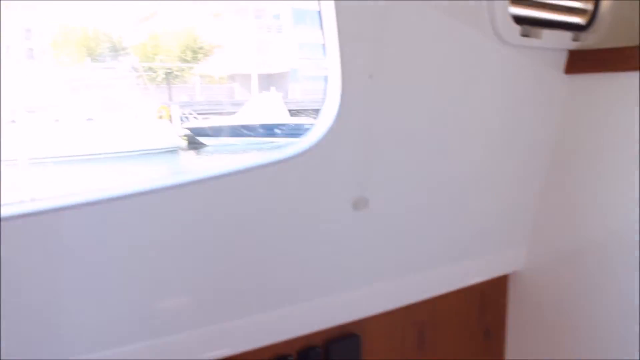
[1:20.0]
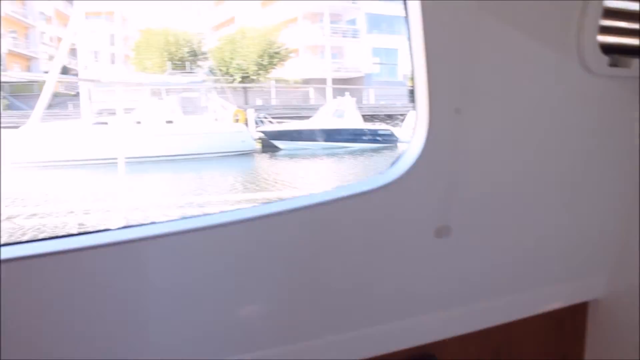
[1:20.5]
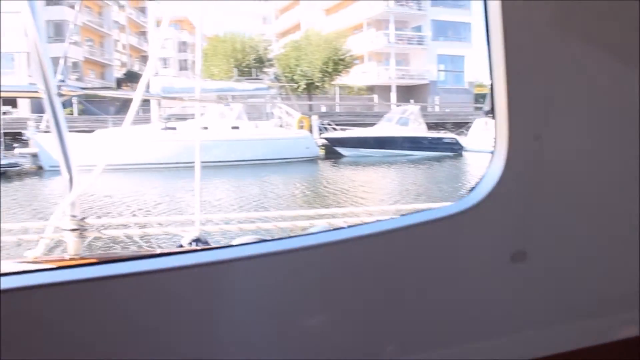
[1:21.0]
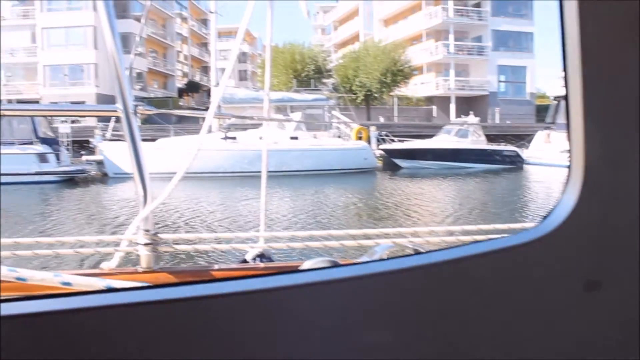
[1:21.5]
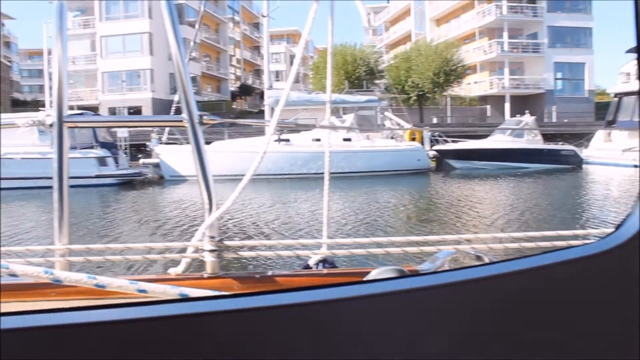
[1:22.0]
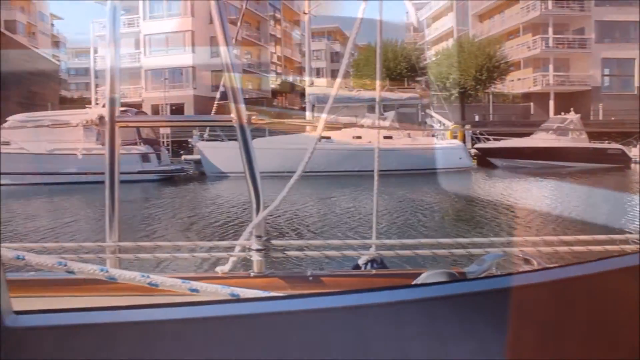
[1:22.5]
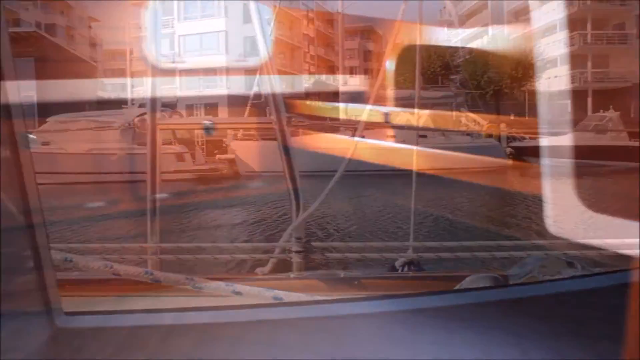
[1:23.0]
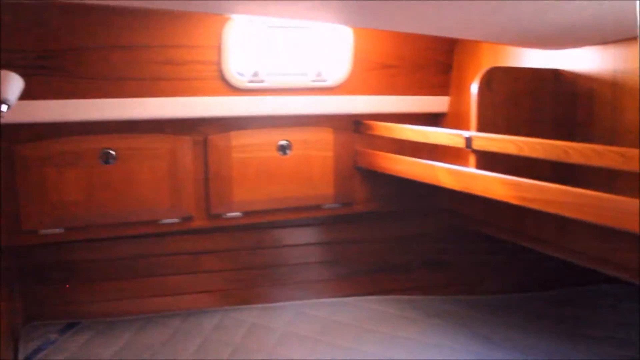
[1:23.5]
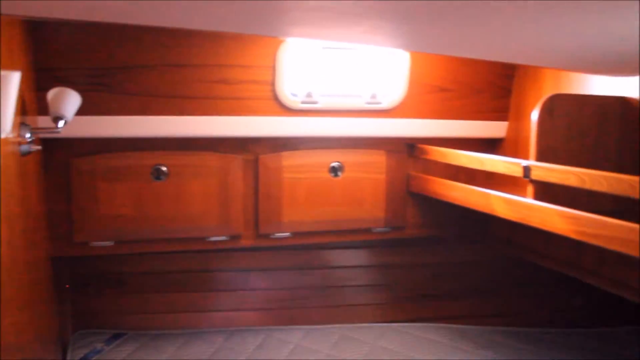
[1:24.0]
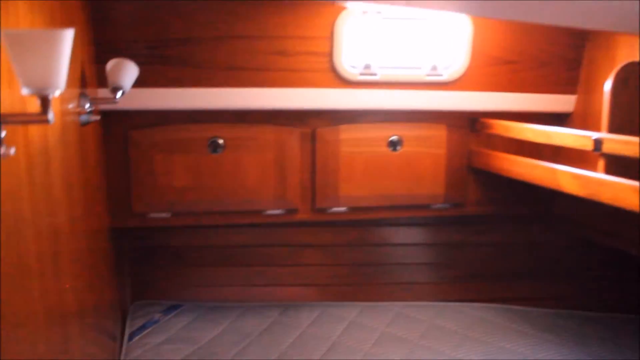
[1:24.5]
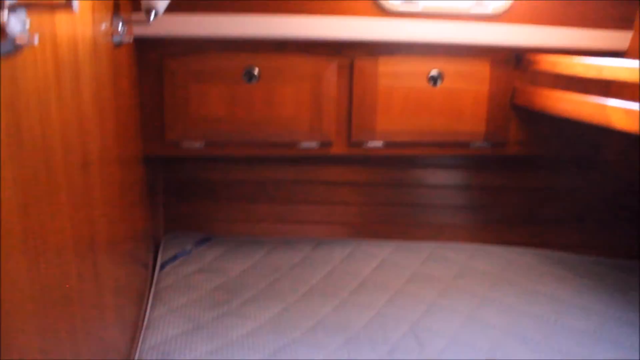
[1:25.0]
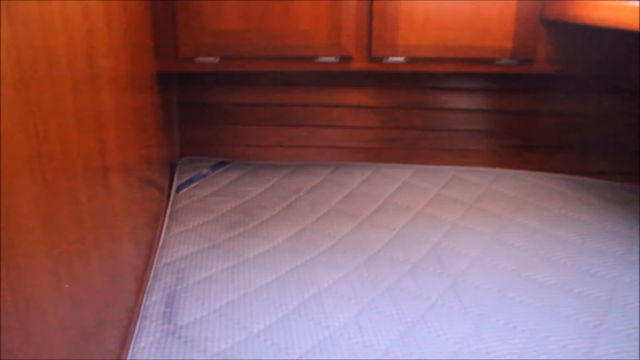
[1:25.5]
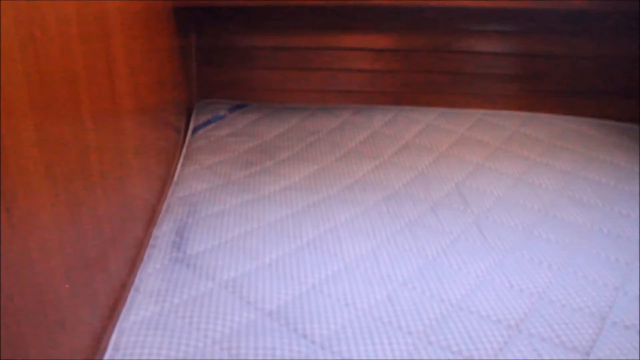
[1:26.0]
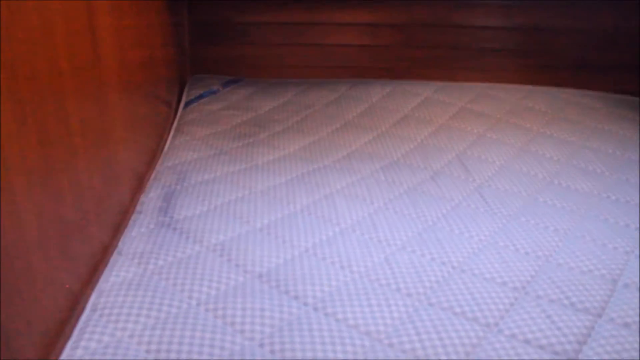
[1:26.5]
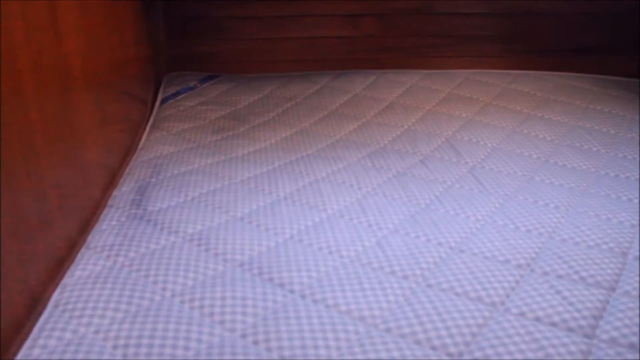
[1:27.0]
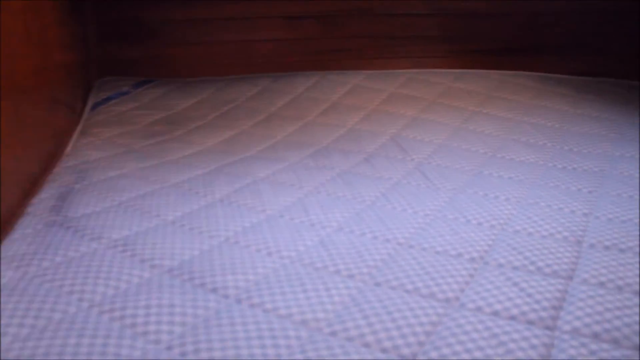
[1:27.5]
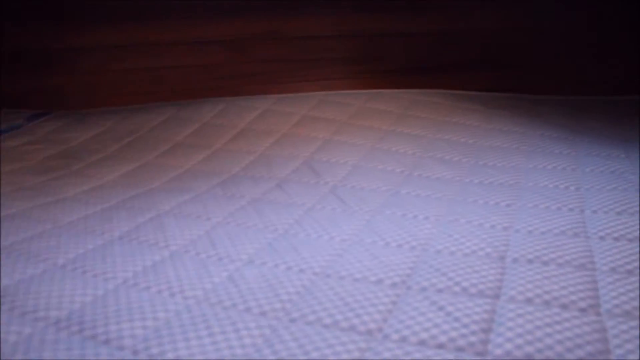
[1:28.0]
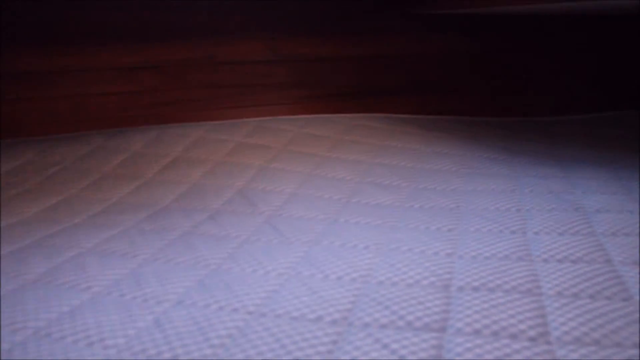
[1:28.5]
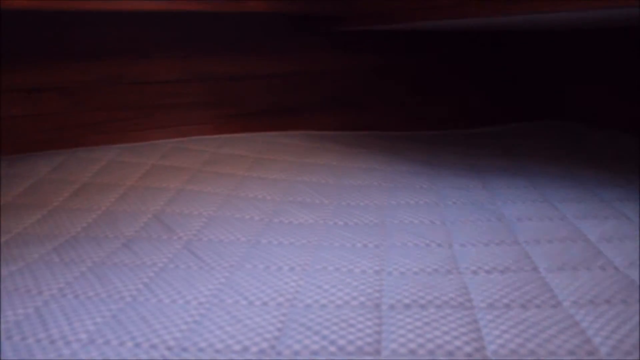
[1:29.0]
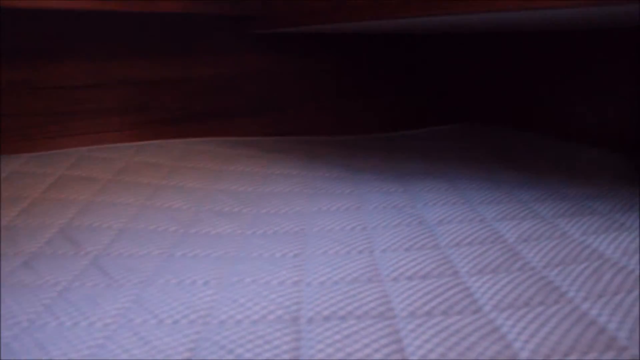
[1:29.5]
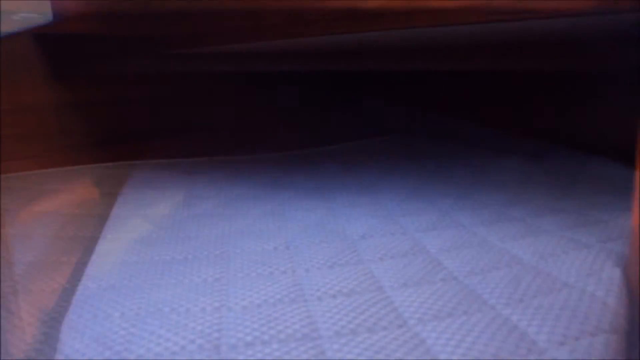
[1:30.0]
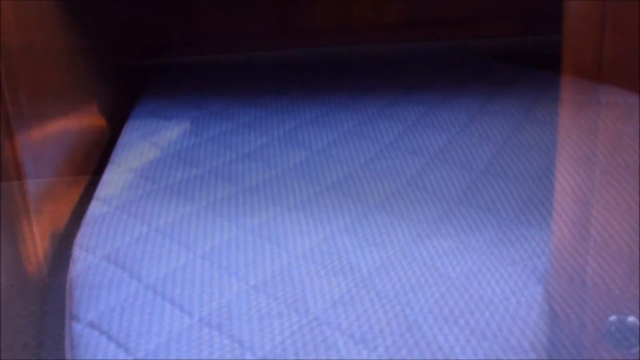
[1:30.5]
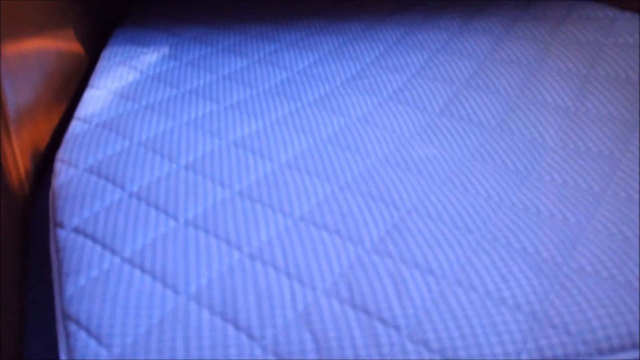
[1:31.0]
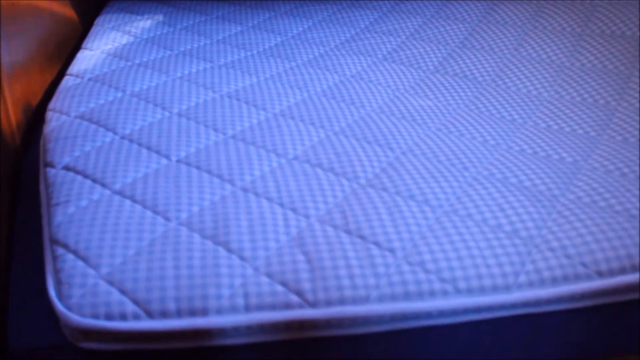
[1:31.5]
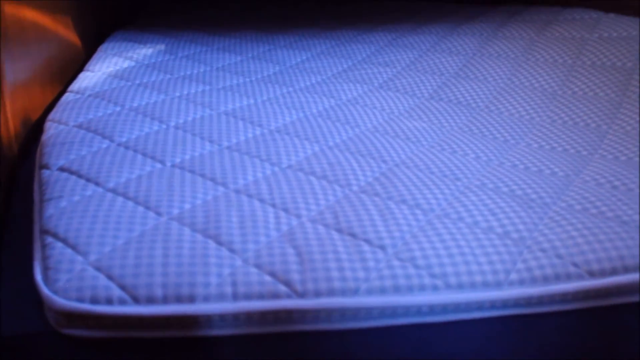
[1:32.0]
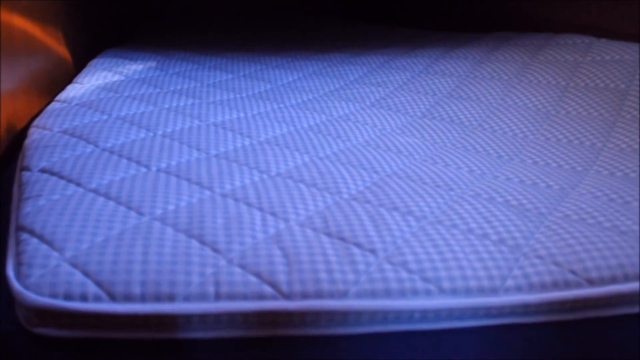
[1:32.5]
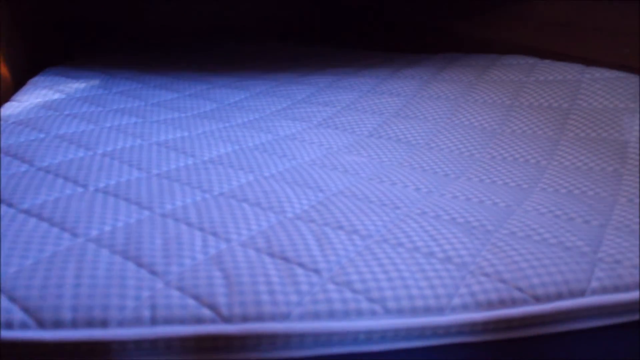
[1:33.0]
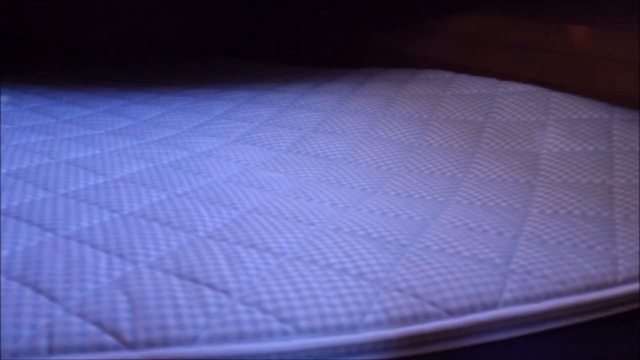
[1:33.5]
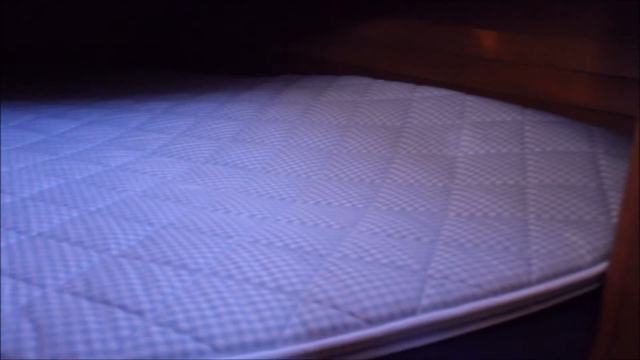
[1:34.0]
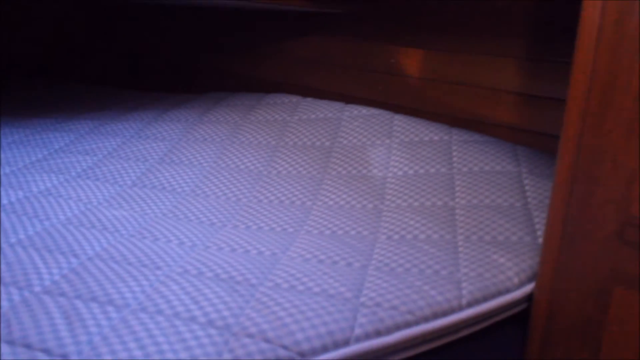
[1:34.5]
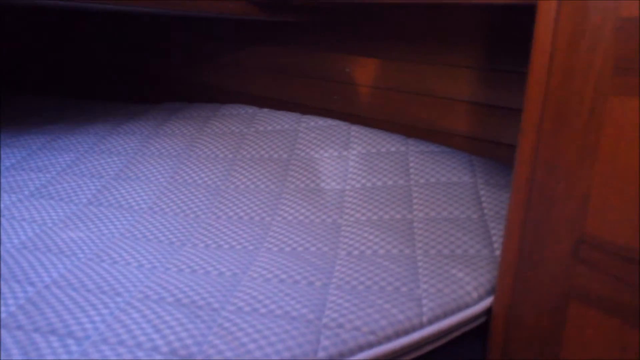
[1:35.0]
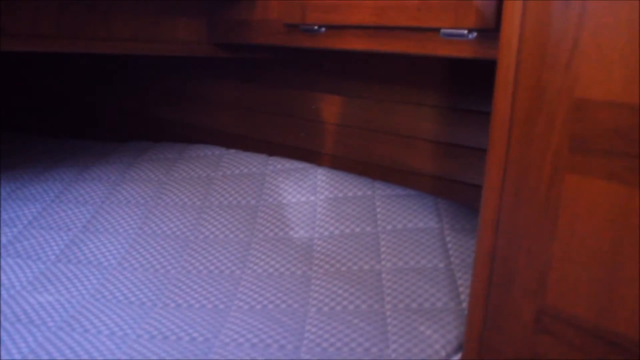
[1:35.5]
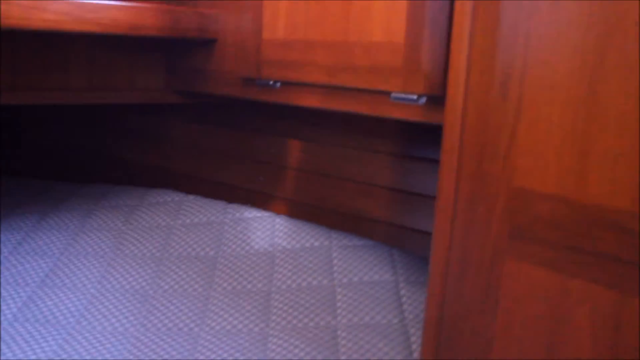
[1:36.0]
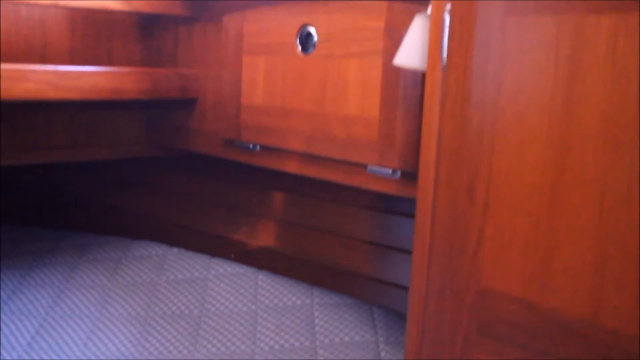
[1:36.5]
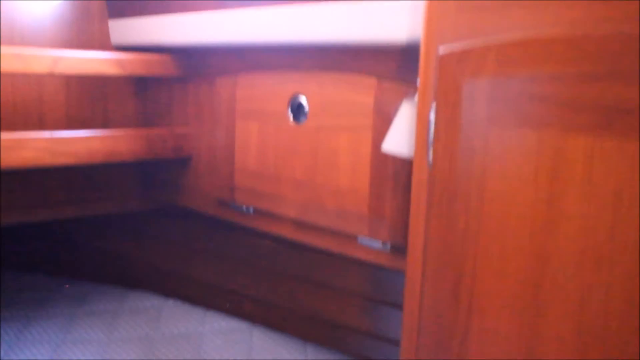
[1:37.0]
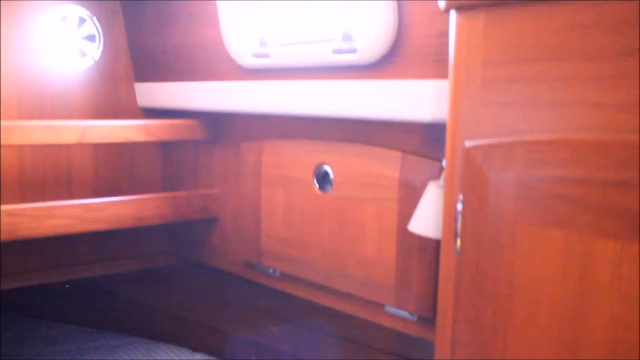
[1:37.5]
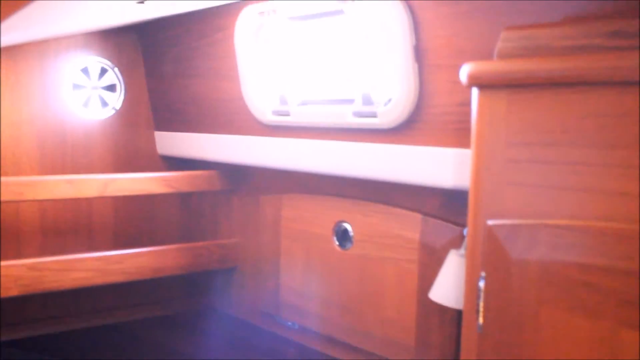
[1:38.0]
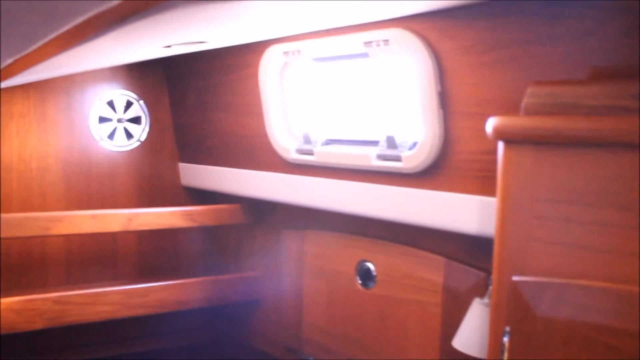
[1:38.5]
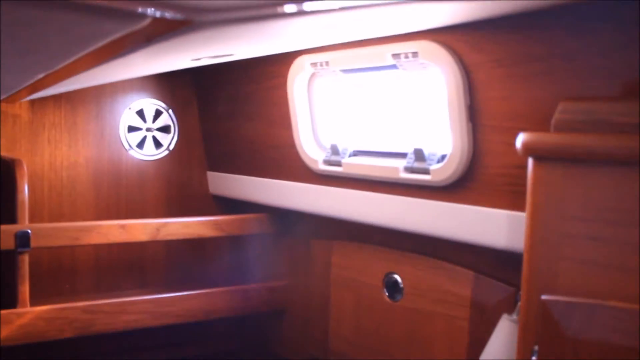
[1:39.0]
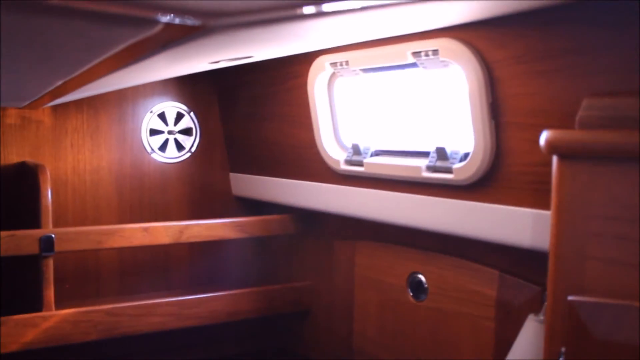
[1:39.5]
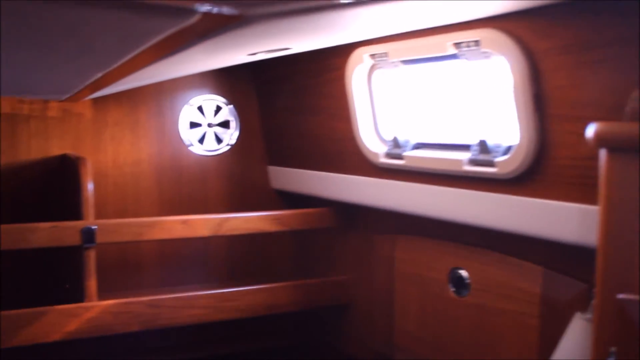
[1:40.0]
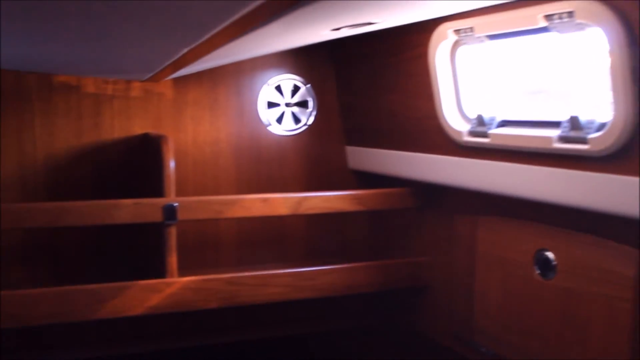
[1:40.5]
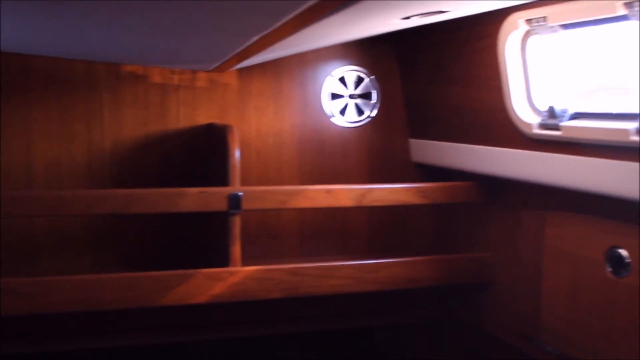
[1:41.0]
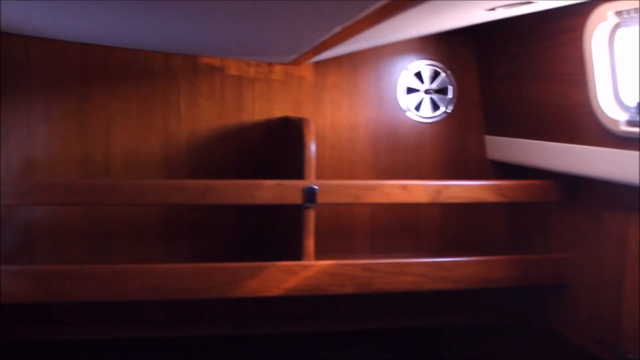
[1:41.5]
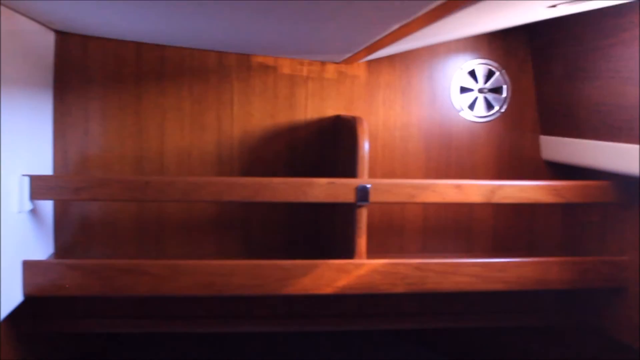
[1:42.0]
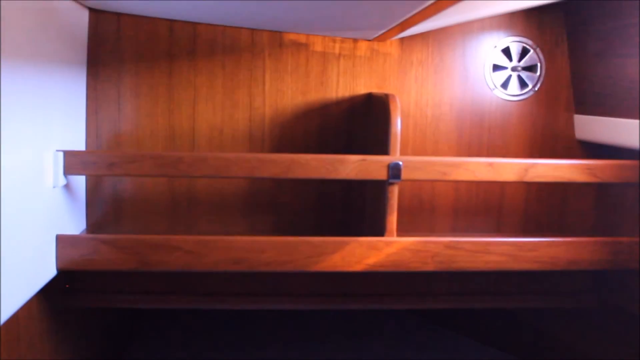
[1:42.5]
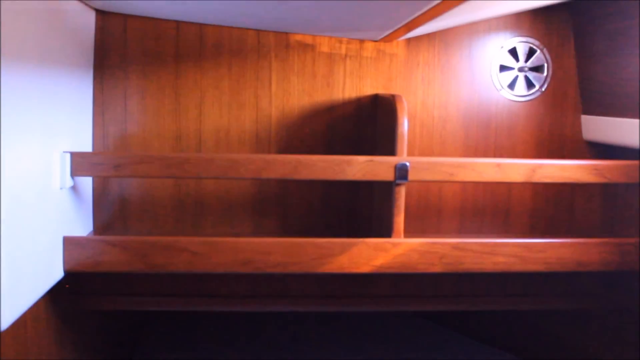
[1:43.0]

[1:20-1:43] The camera moves to the left and views the outdoor area through the window, where other boats are docked. The scene changes to show what looks like a sleeping area: a small, compact space that appears to be a little bedroom with a very large bed that looks like a king-size bed. The bottom part is nothing but a mattress, which takes up the whole area of the space. Above there is a shelf for putting items, and there also appears to be a little door or cabinet. There are some shelves to the side of the mattress, and a window in the room with light shining through.